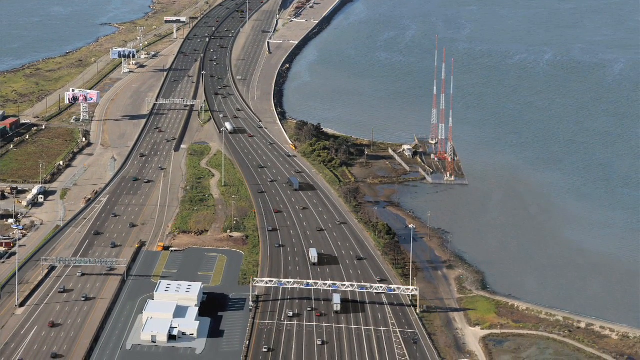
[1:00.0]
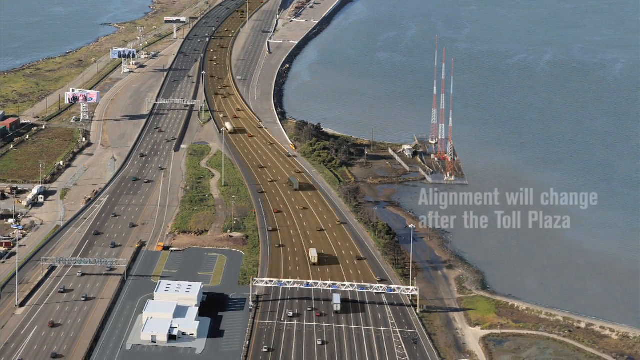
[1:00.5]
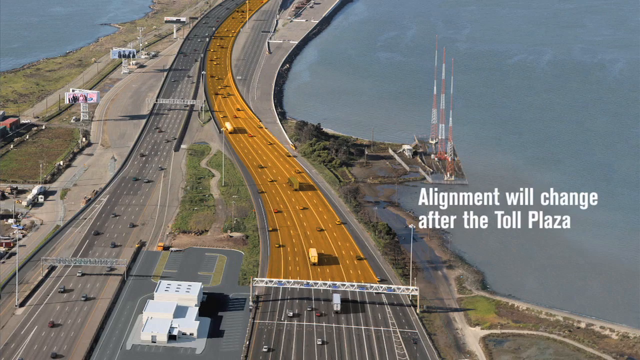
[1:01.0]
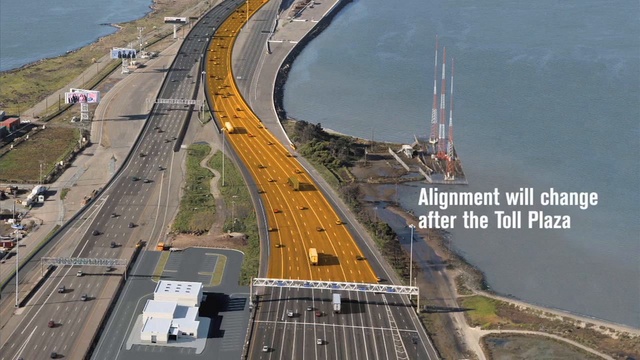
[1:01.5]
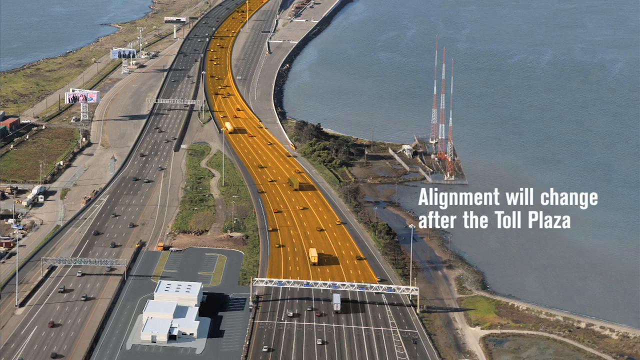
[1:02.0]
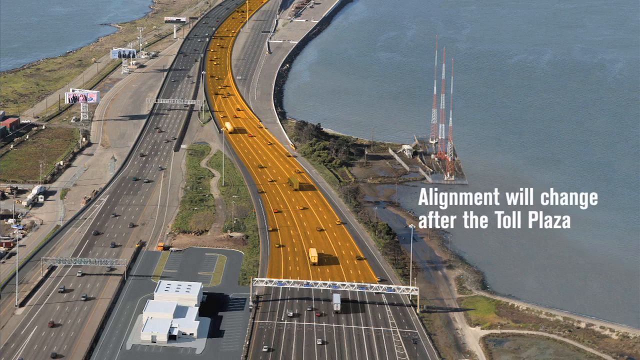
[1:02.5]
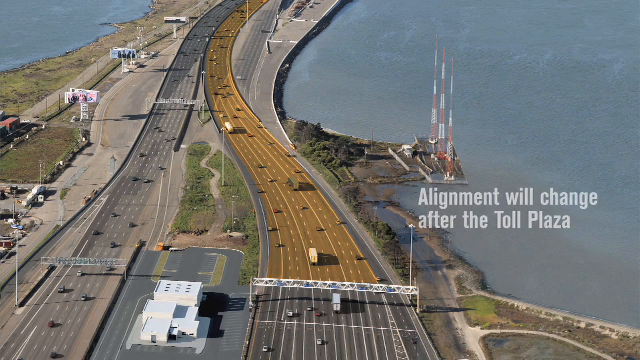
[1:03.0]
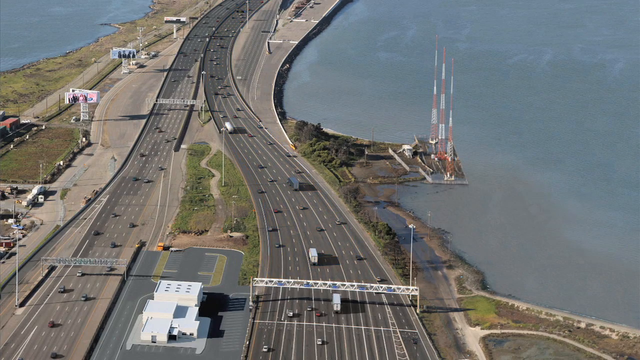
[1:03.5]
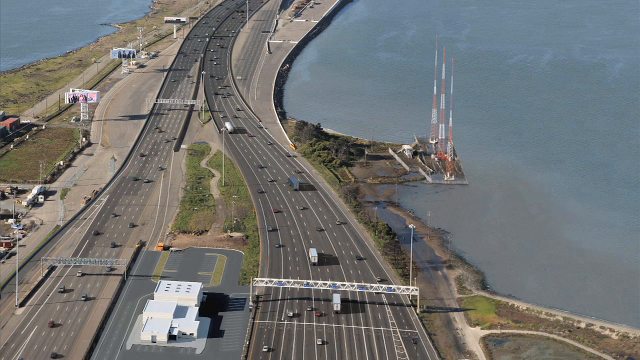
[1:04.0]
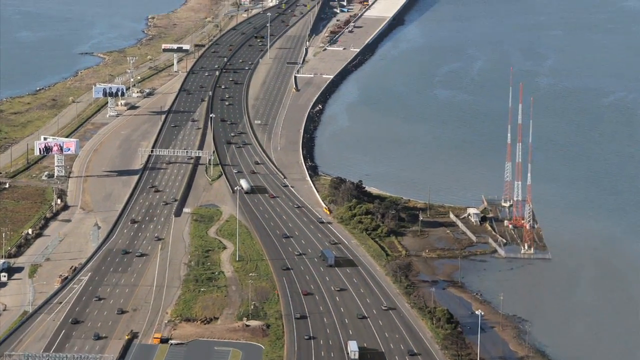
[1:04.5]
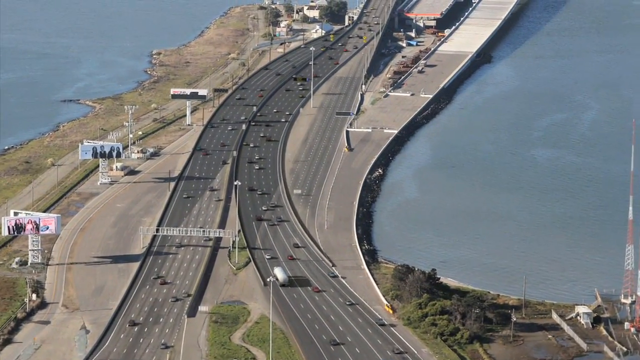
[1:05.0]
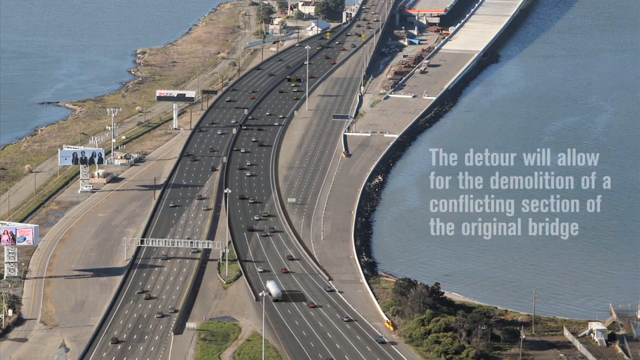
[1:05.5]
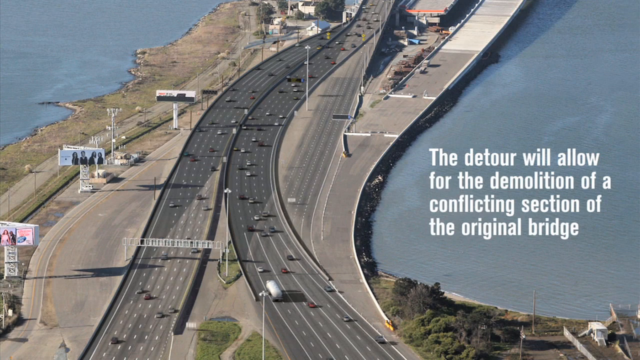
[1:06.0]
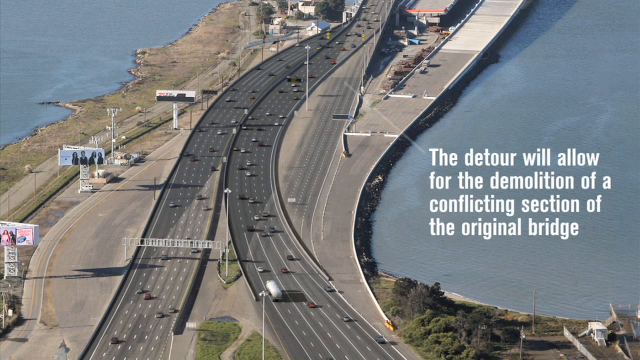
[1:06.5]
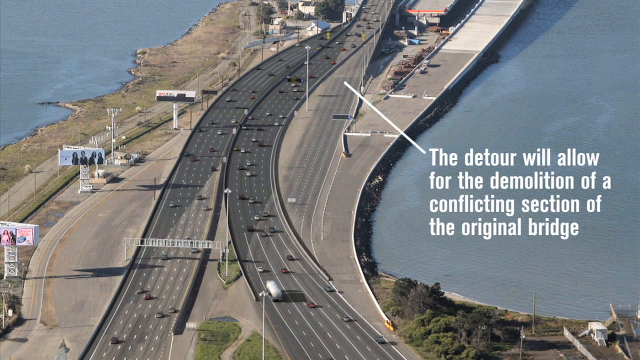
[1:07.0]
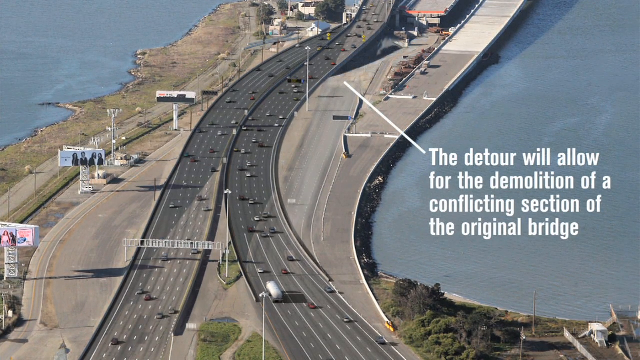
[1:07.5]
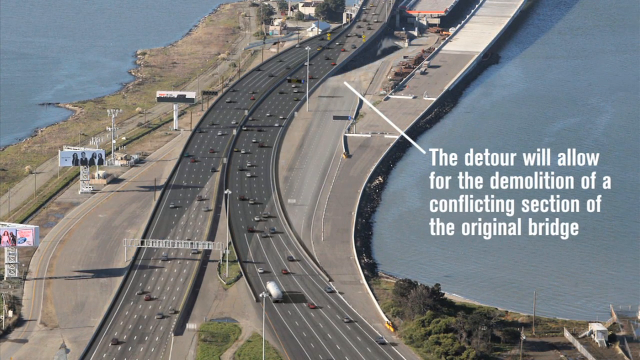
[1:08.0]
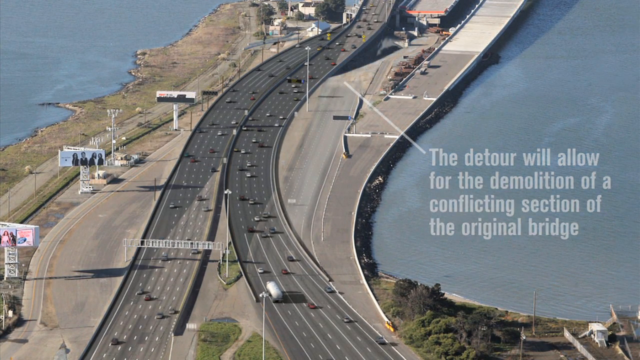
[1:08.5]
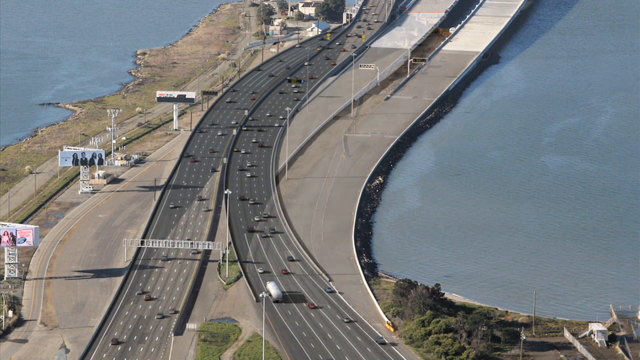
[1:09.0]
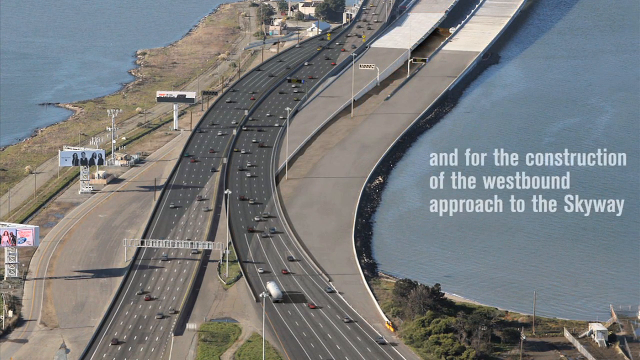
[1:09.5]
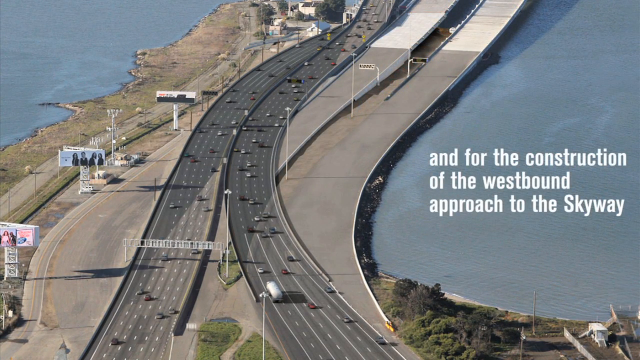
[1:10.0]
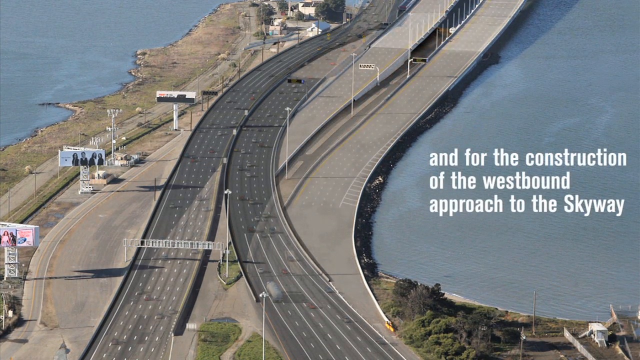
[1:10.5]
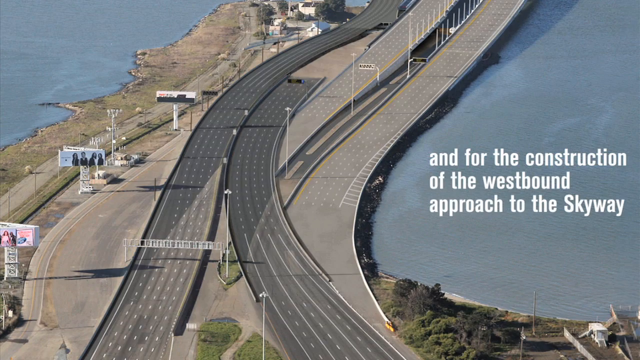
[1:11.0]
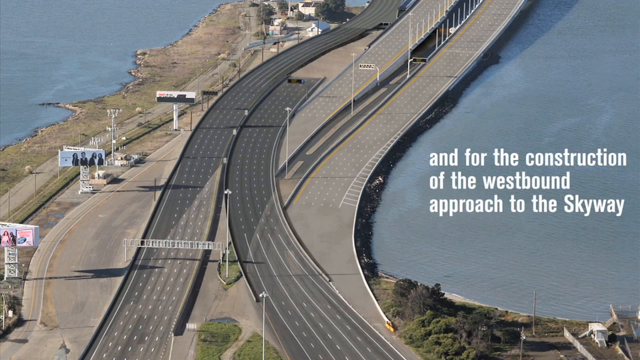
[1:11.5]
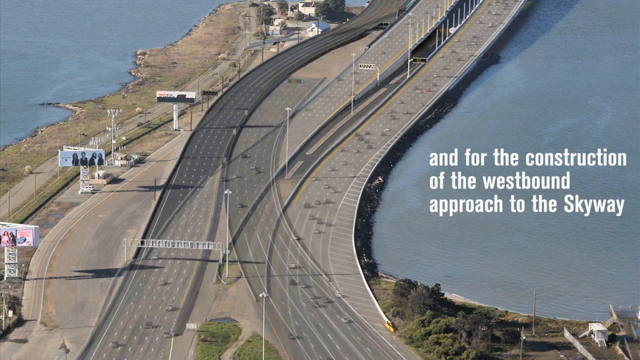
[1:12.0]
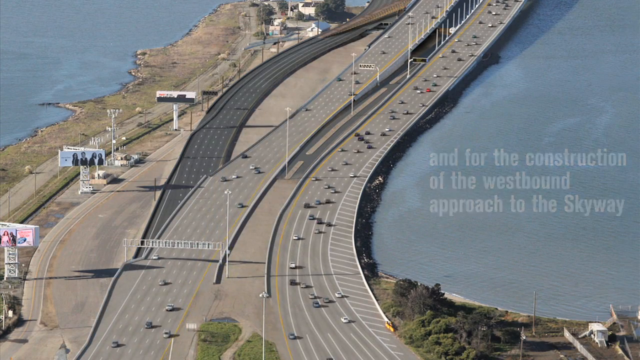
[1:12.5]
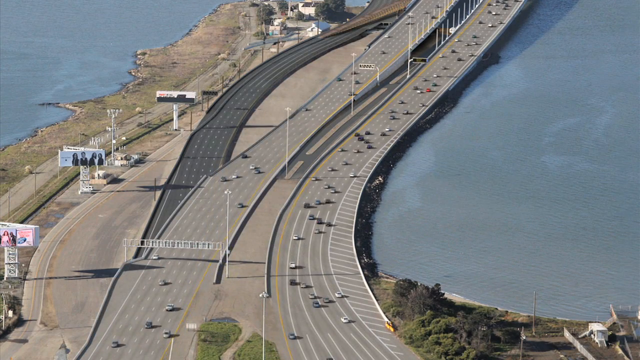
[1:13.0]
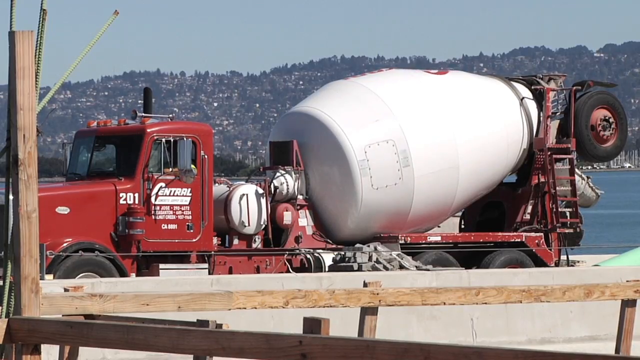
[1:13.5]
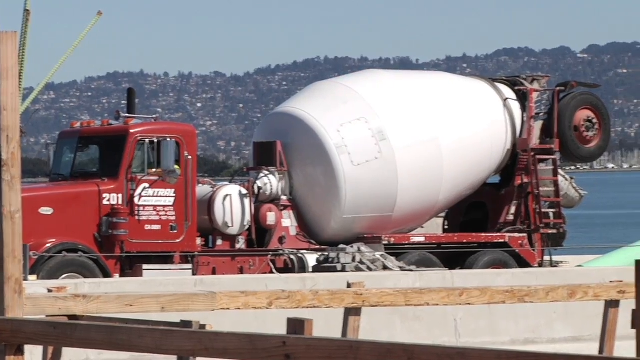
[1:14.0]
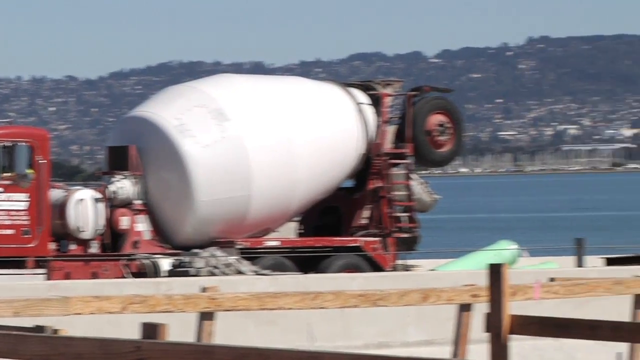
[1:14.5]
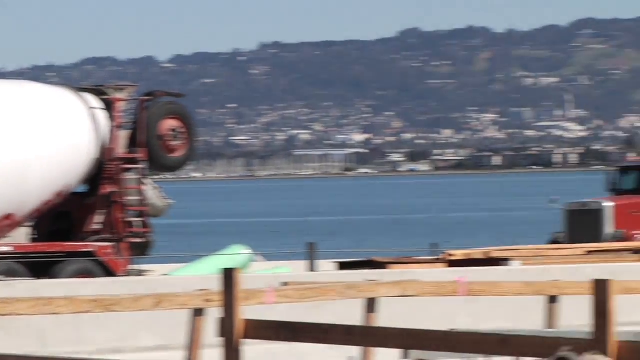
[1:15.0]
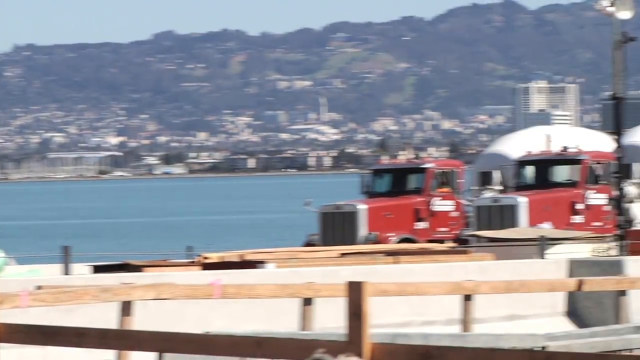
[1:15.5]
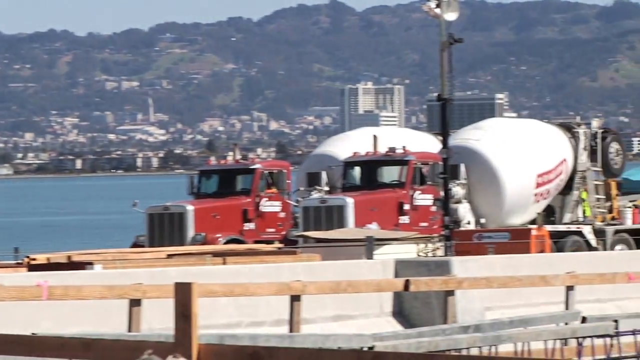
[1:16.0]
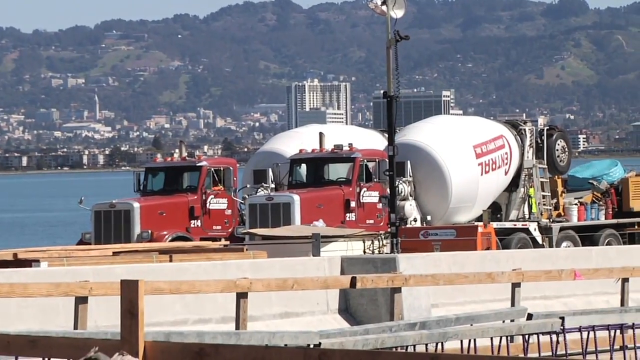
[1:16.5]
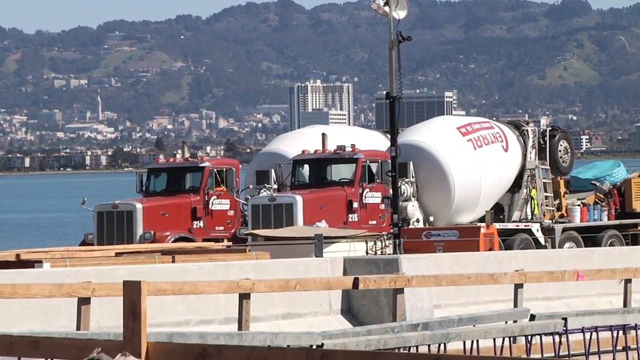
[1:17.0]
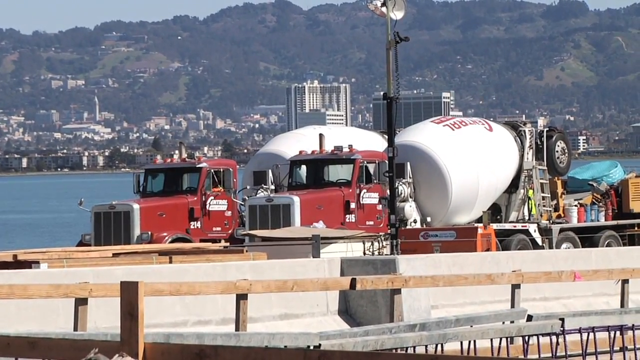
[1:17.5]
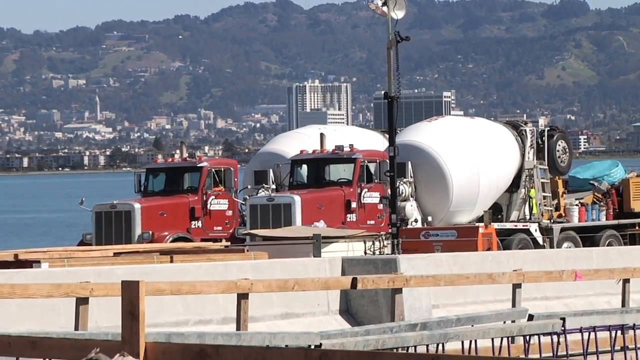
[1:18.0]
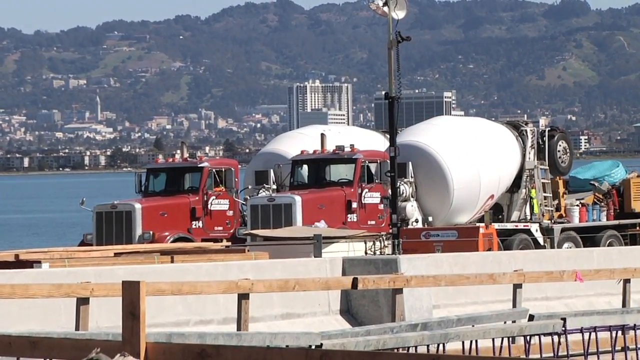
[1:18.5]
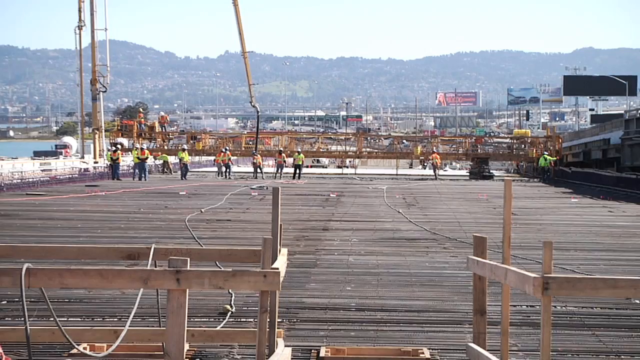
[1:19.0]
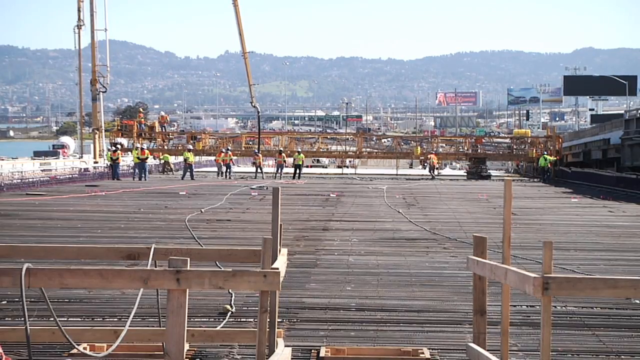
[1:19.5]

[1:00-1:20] Several vehicles are shown about to get on the bridge, and the streets are illuminated in orange. On the right, text appears that reads "Alignment will change after the toll plaza." The light coloring the streets disappears, and the camera moves to a closer part of the bridge, where text over the sea reads "The detour will allow for the demolition of a conflicting section of the original bridge. And for the construction of the westbound approach to the skyway." A white line points to a section of the roads, followed by how it will look once it is demolished or removed, and more animations like these show the changes the roads will go through. Finally, the scene moves to a cement mixer with more workers in the background, still spreading cement.